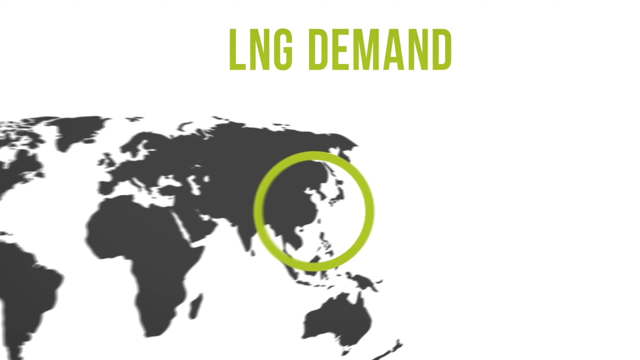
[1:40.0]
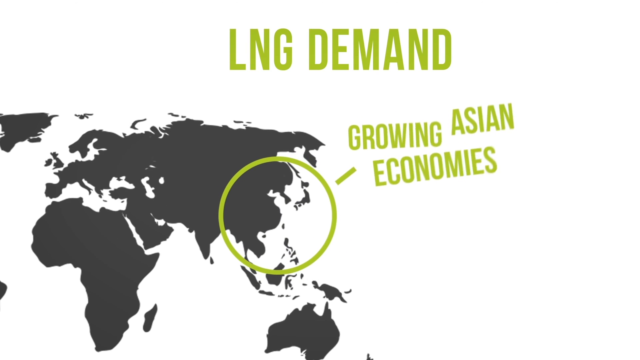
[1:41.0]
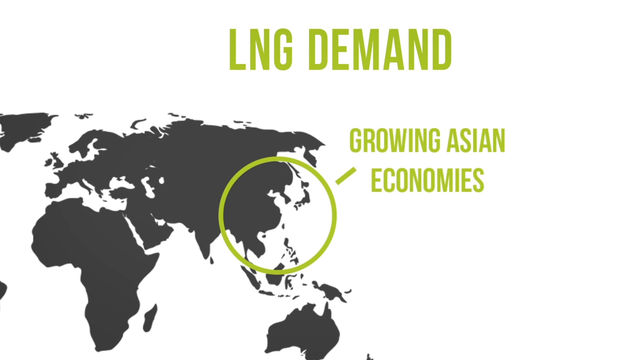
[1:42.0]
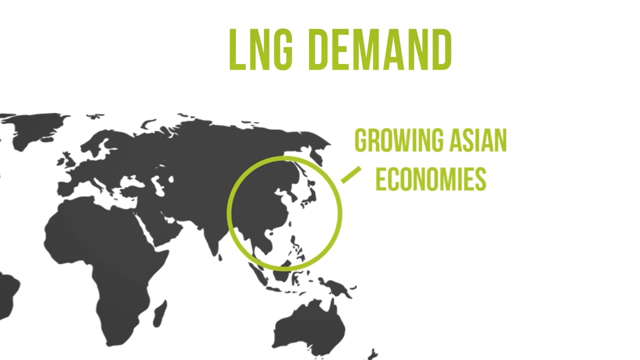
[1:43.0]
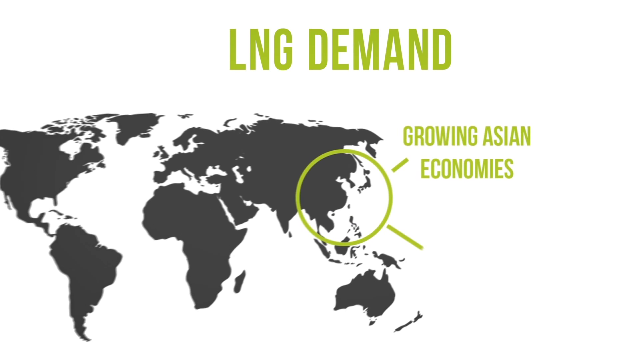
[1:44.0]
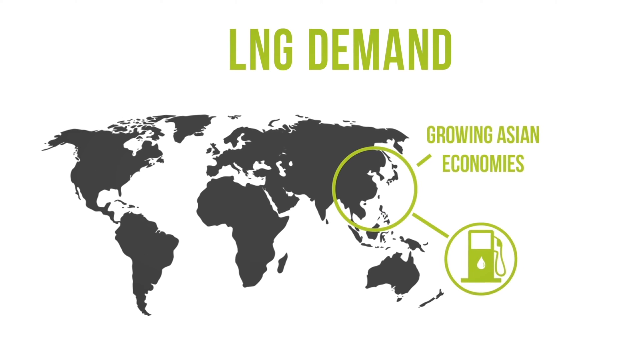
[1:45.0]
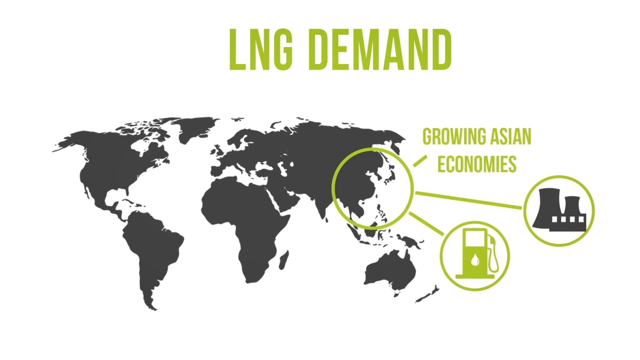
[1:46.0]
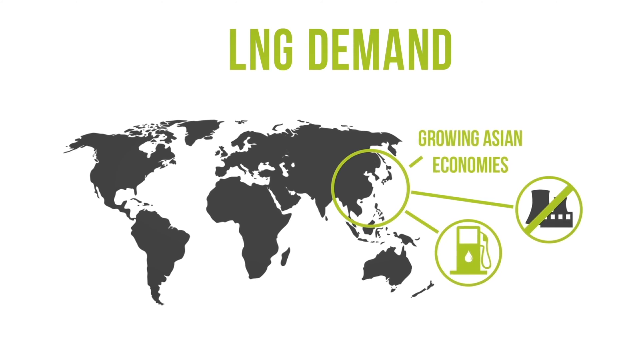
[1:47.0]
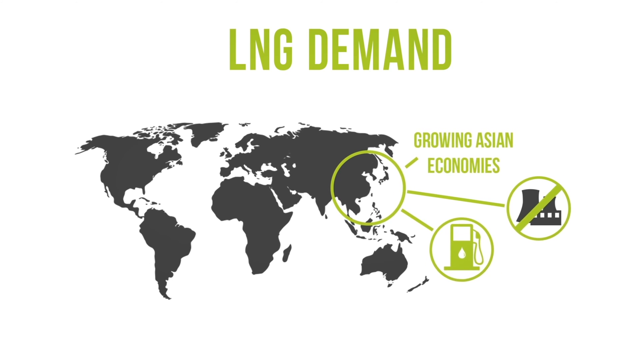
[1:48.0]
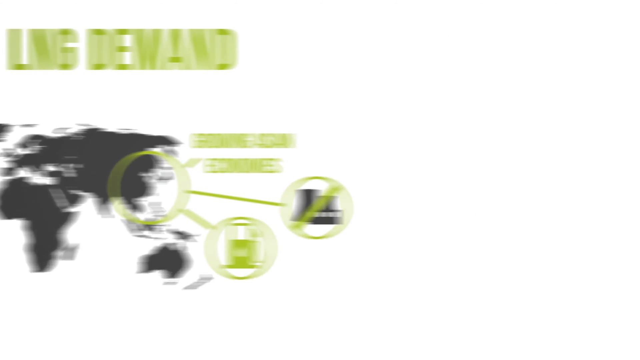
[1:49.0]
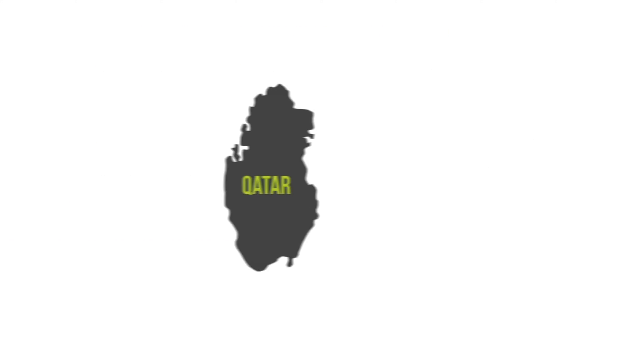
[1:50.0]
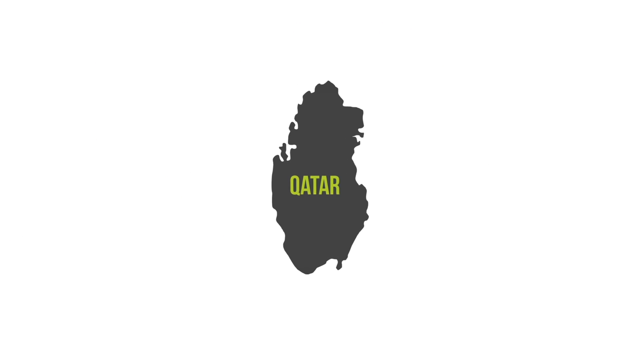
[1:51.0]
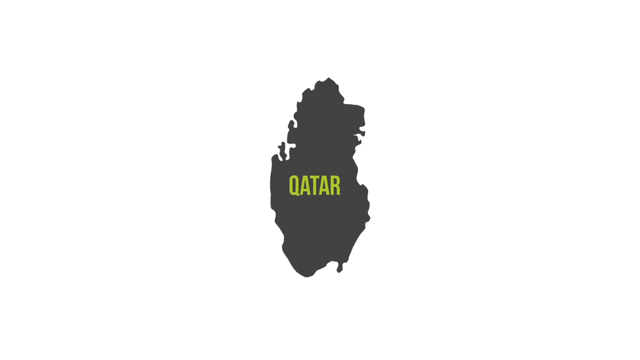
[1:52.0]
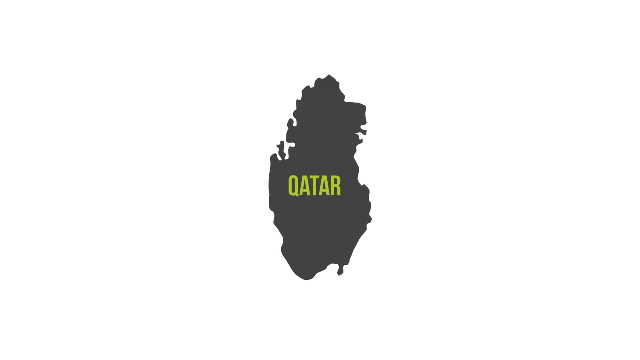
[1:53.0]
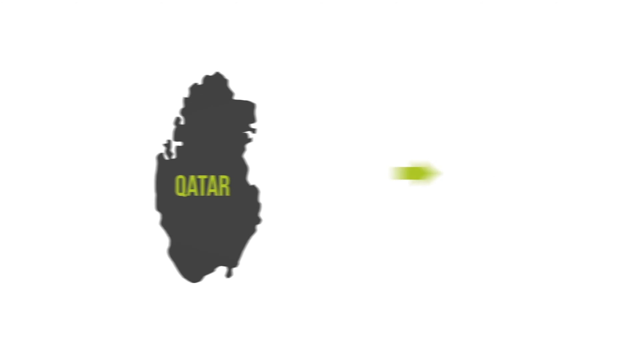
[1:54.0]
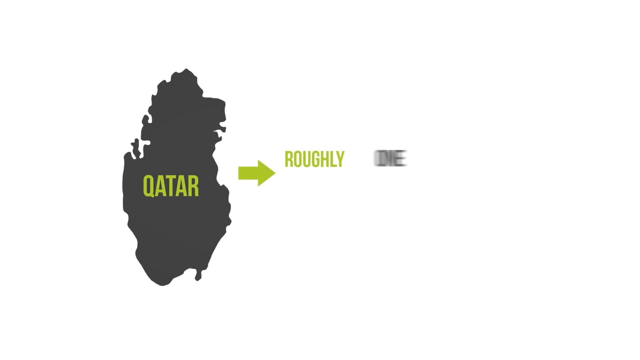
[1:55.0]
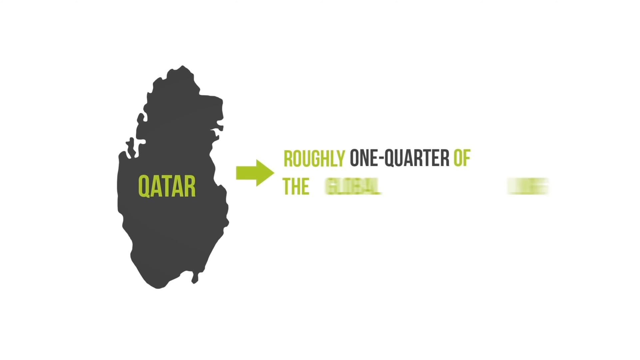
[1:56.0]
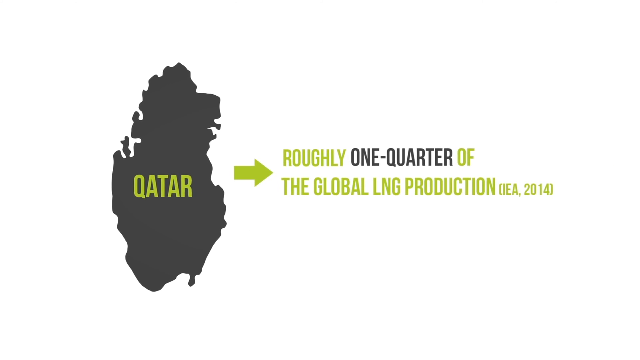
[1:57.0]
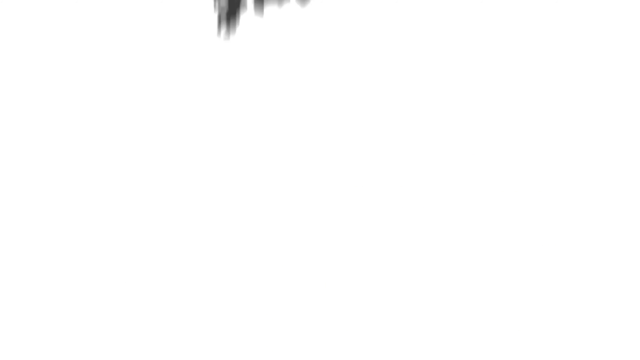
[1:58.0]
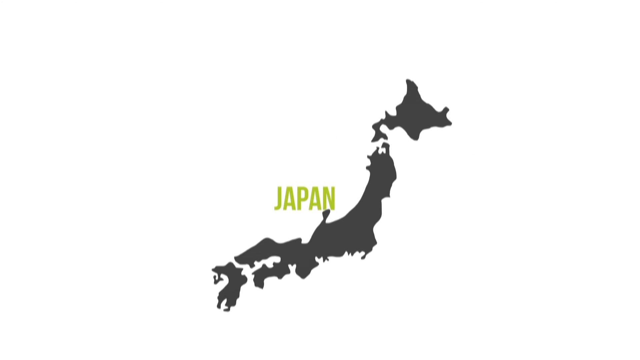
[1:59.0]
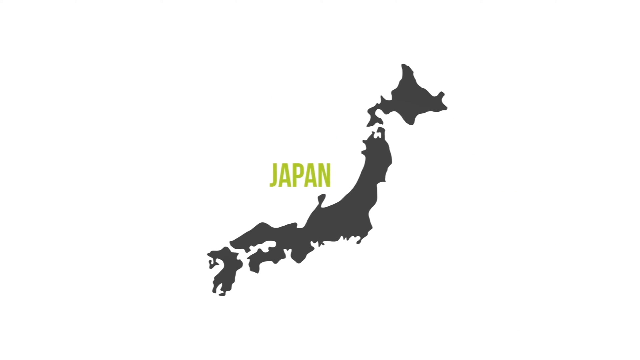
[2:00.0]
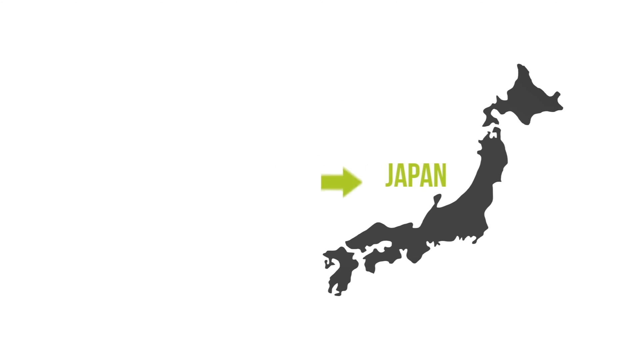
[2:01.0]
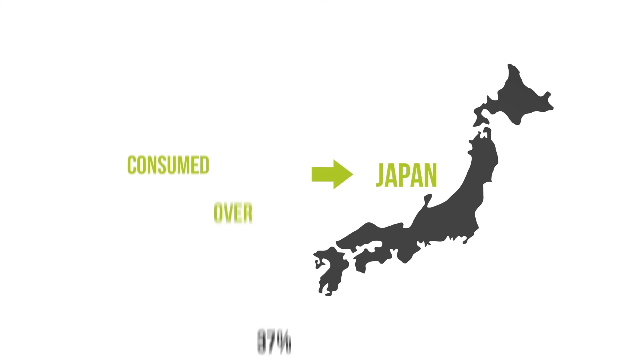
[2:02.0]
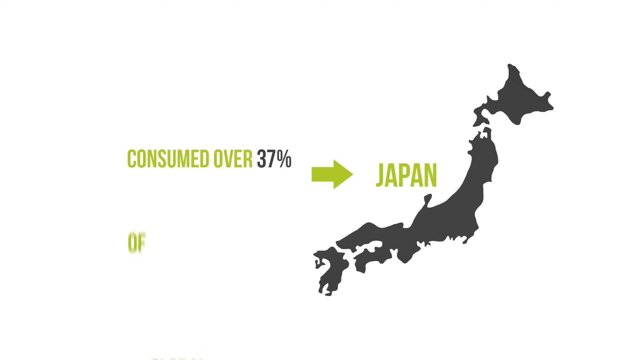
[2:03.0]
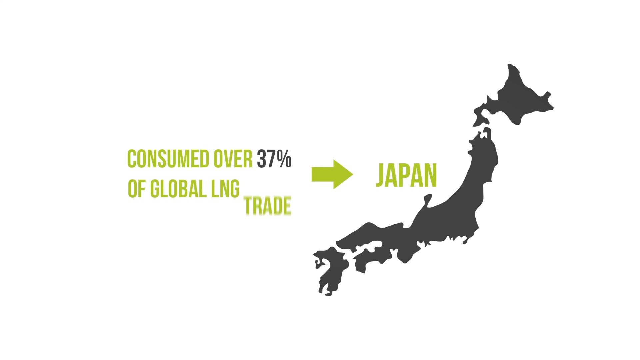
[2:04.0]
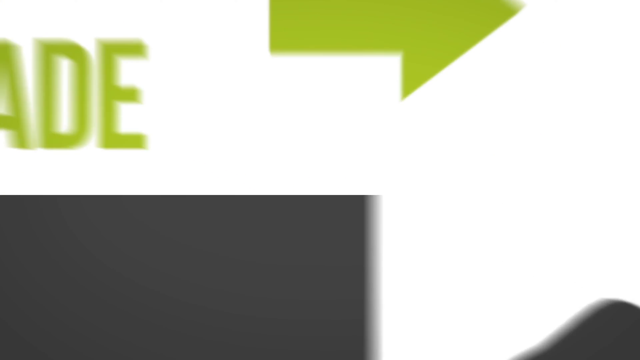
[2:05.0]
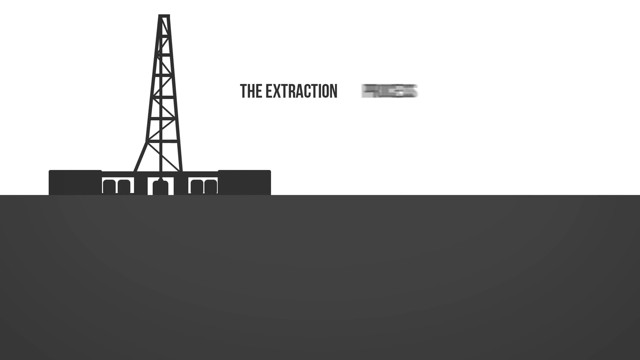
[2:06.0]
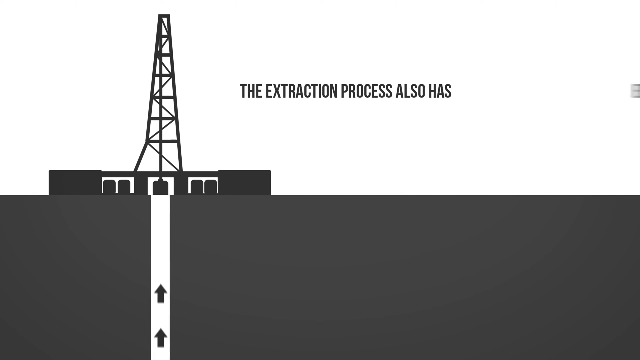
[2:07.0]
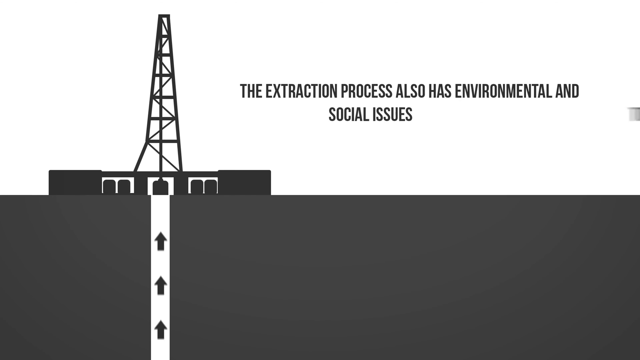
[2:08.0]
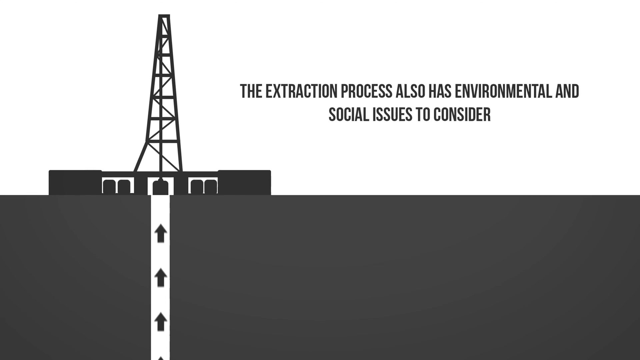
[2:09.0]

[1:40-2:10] Text reads "LNG demand" with part of the map circled and the words "growing Asian economies". A little gas icon appears, then a little refinery icon. Qatar is shown with text stating "roughly one quarter of the global LNG production". Japan follows, with the text "consumed over 37% of global LNG trade". Finally, text reads "the extraction process also has environmental and social issues to consider".